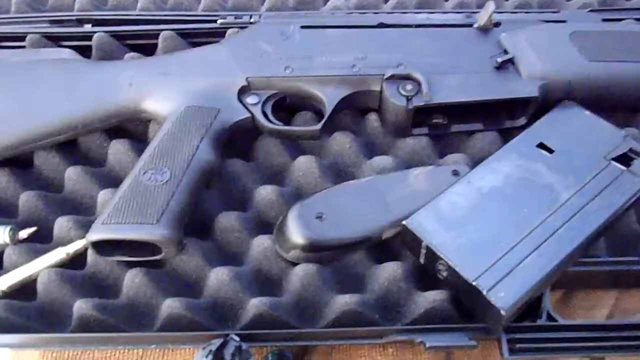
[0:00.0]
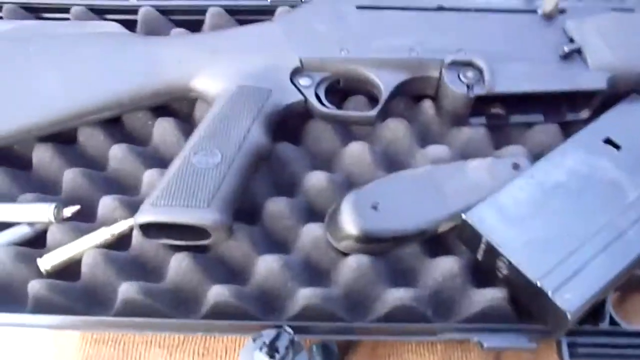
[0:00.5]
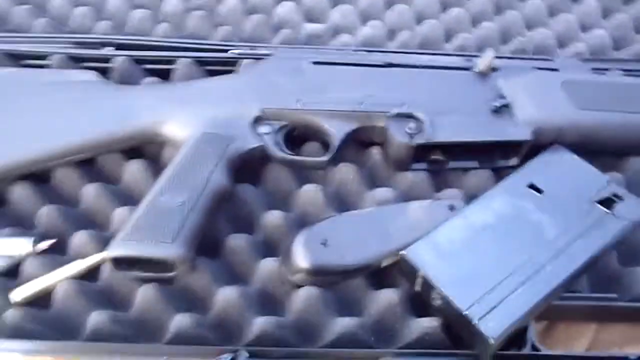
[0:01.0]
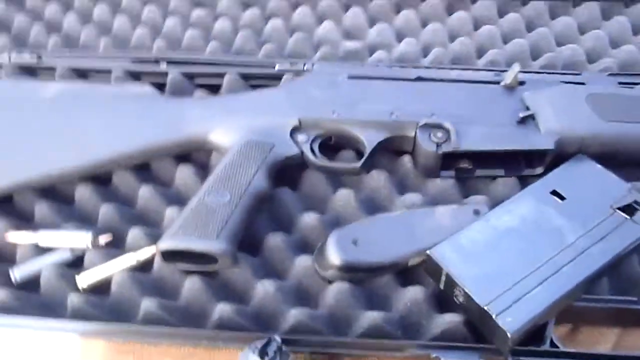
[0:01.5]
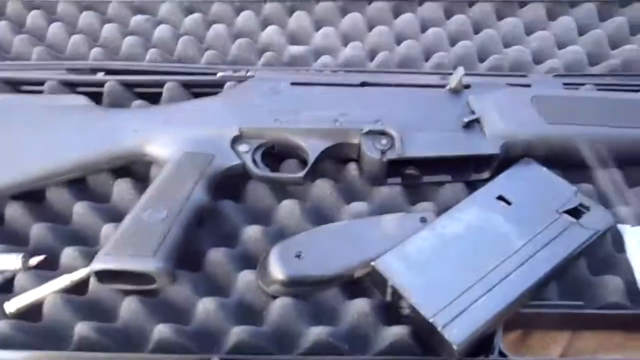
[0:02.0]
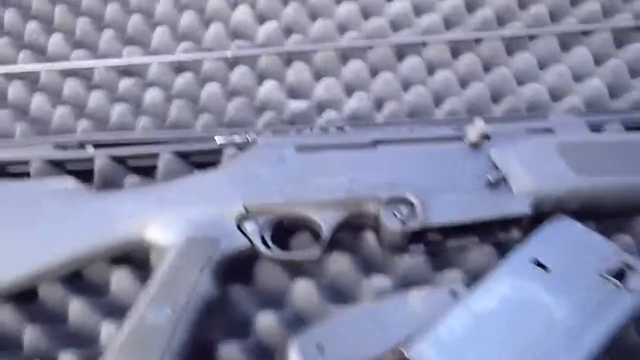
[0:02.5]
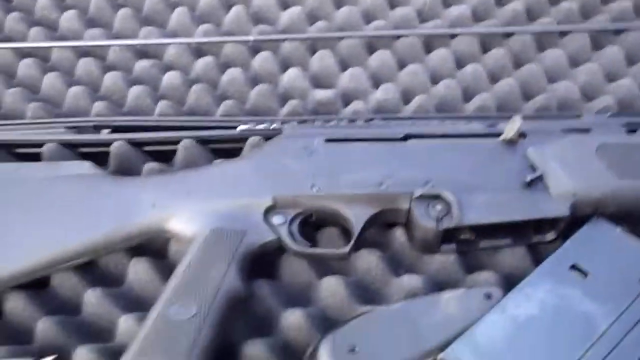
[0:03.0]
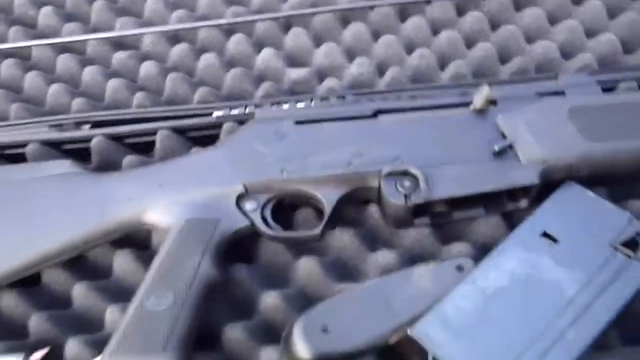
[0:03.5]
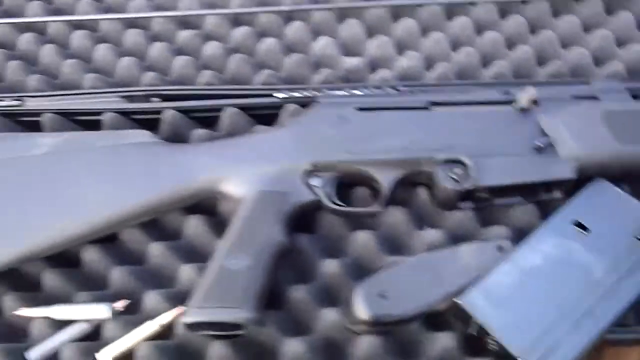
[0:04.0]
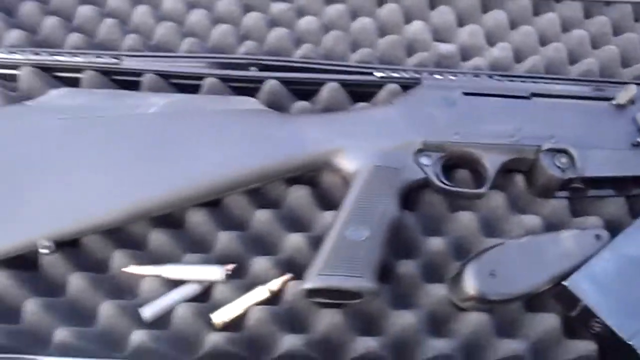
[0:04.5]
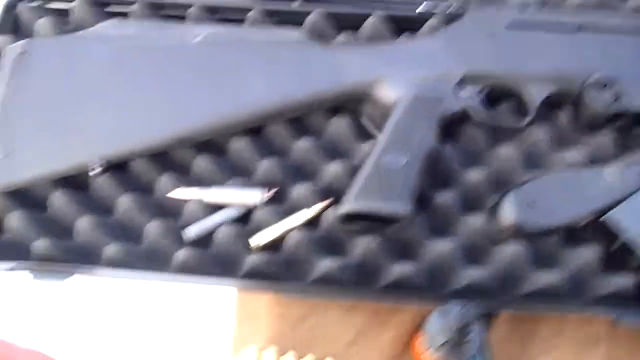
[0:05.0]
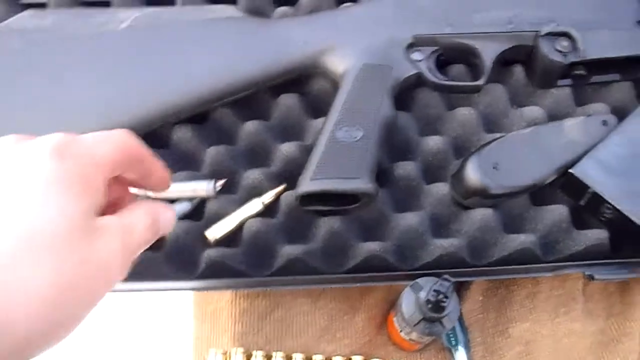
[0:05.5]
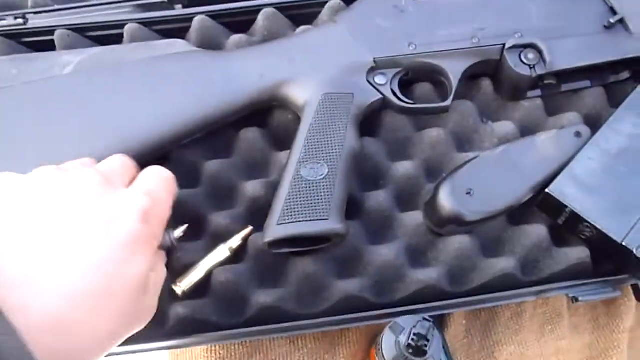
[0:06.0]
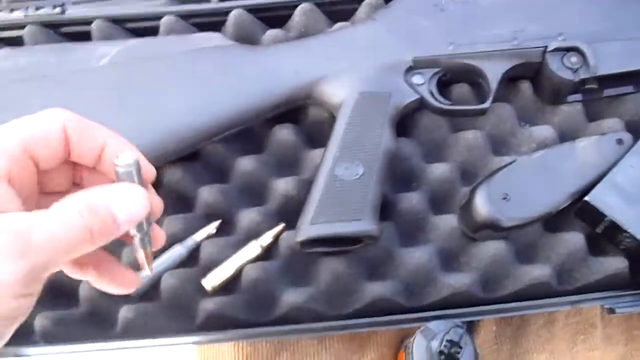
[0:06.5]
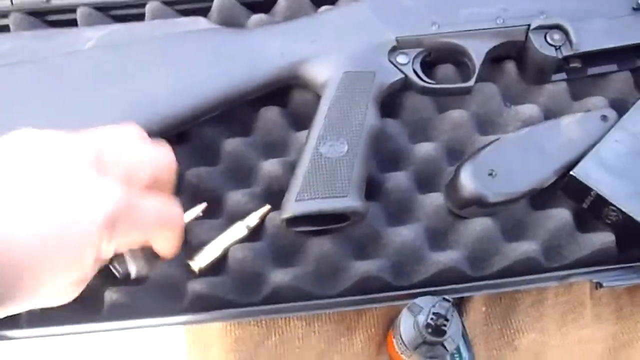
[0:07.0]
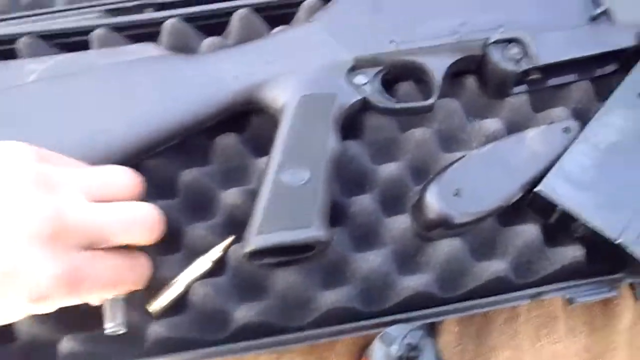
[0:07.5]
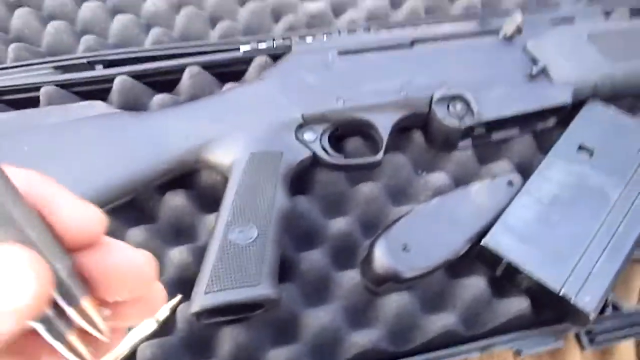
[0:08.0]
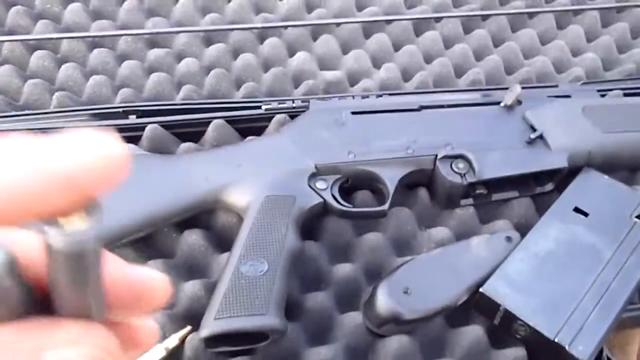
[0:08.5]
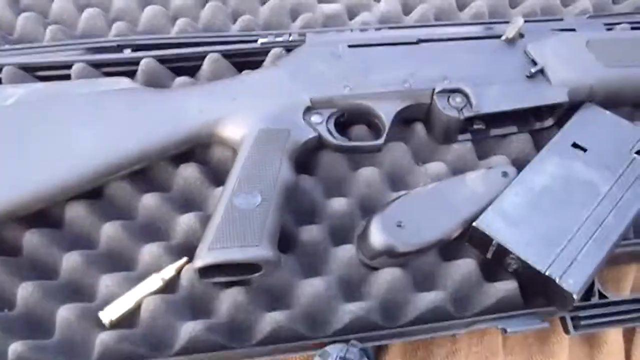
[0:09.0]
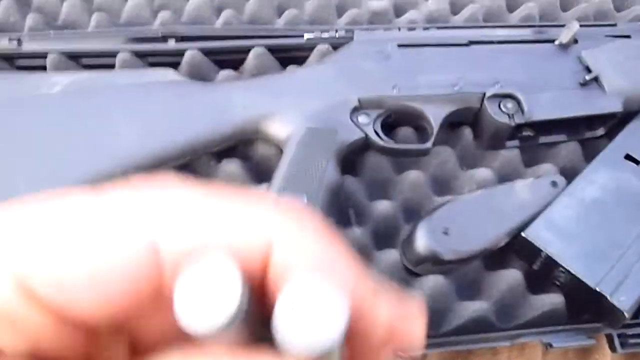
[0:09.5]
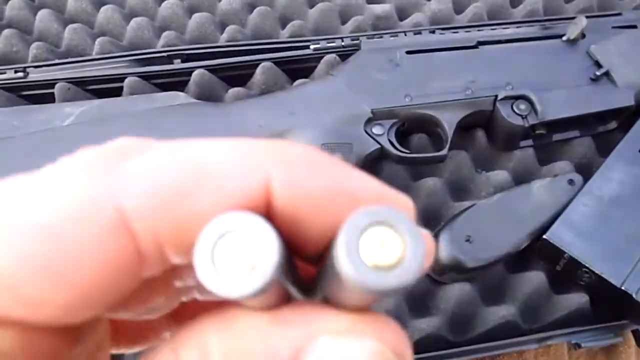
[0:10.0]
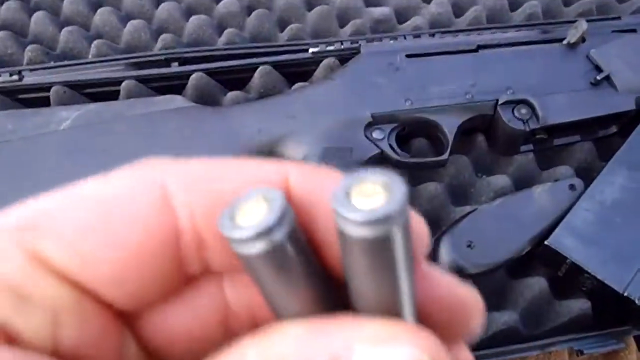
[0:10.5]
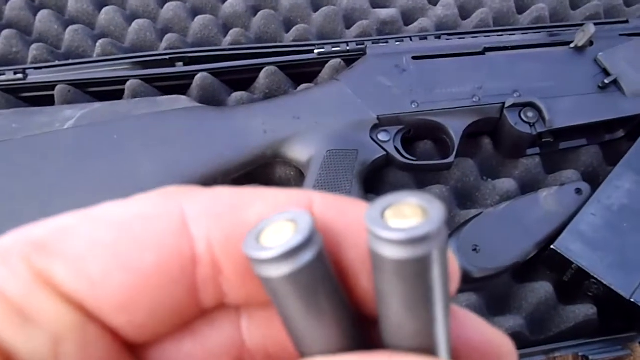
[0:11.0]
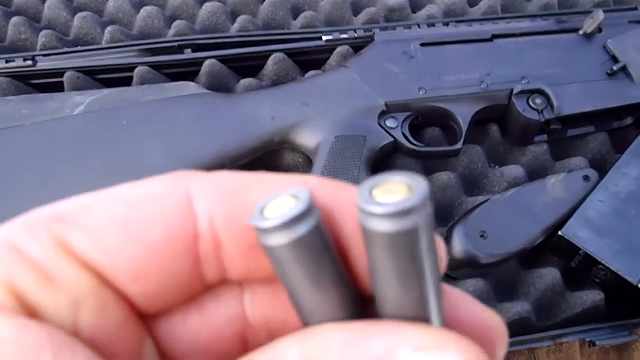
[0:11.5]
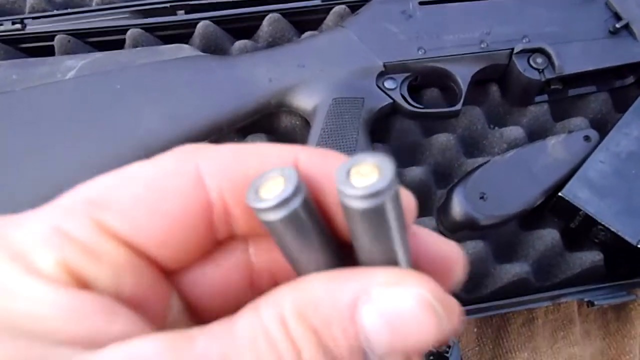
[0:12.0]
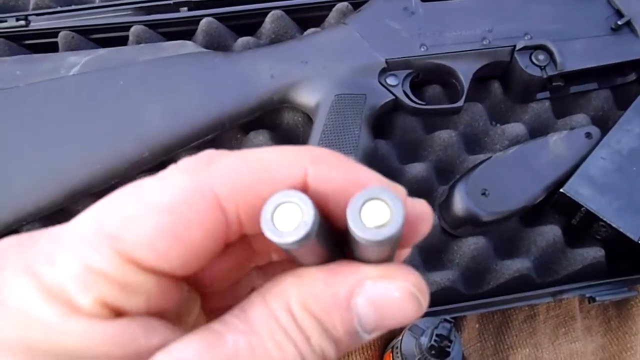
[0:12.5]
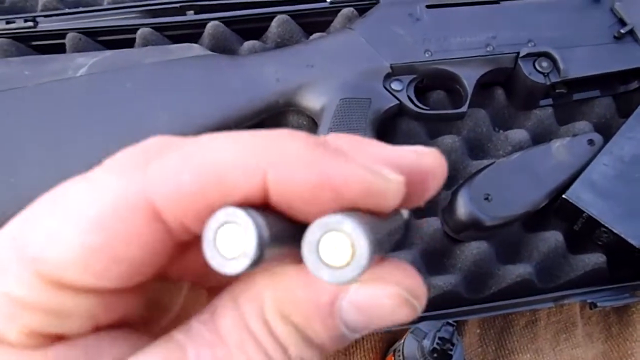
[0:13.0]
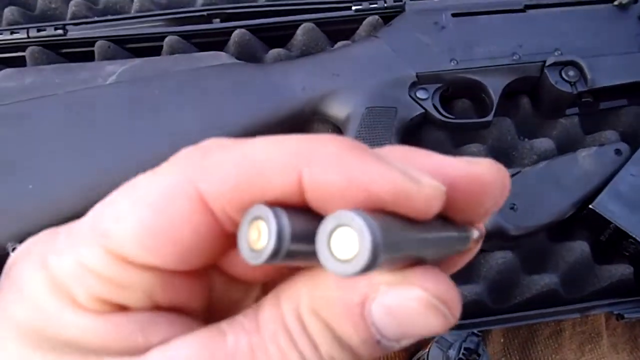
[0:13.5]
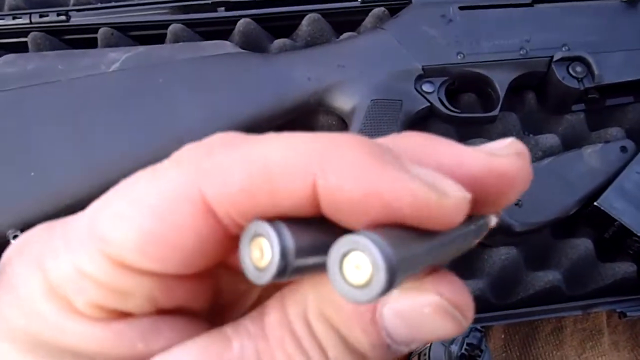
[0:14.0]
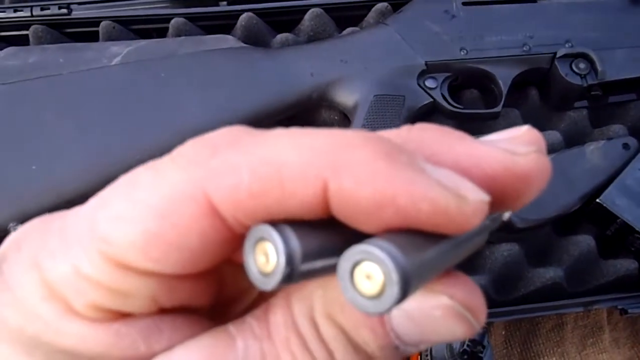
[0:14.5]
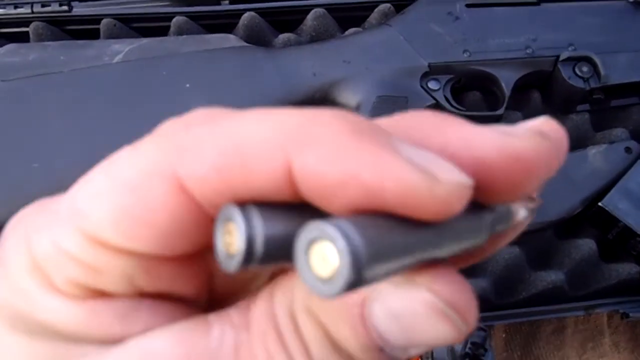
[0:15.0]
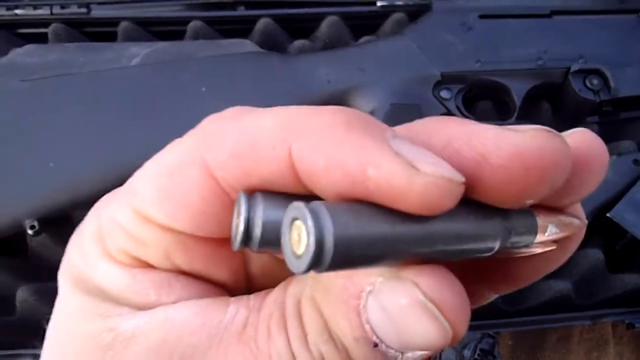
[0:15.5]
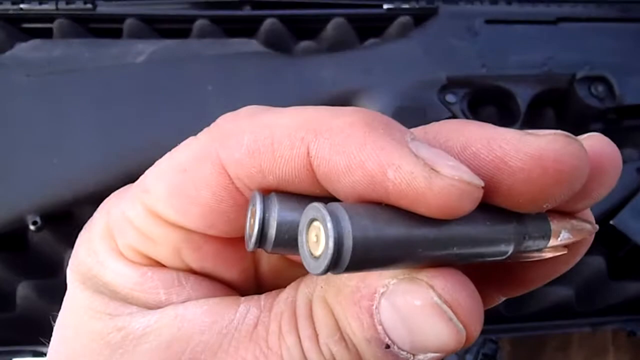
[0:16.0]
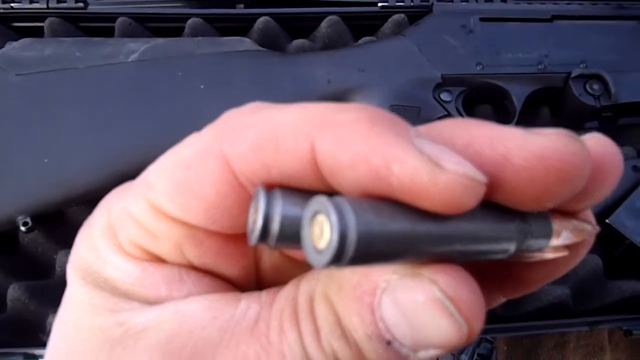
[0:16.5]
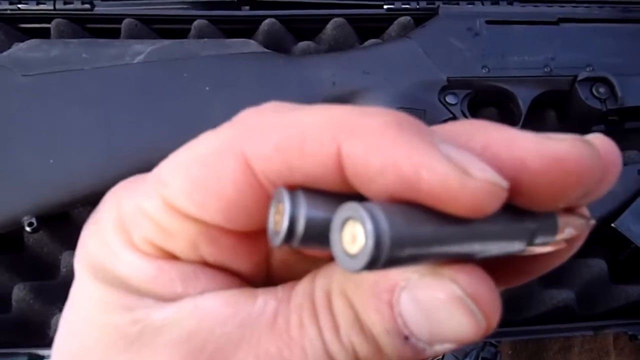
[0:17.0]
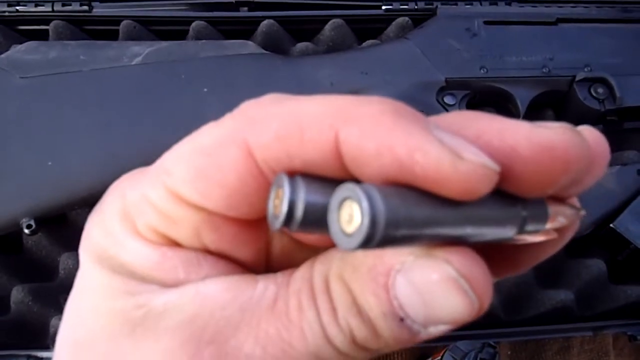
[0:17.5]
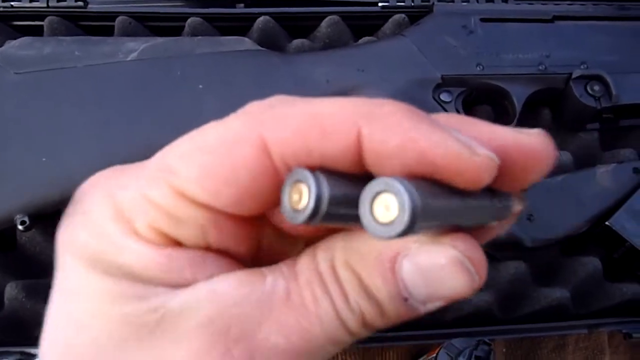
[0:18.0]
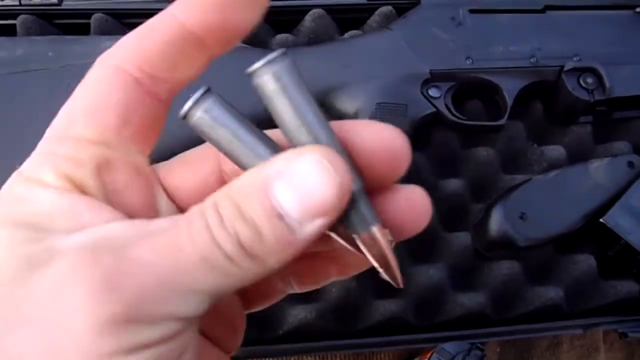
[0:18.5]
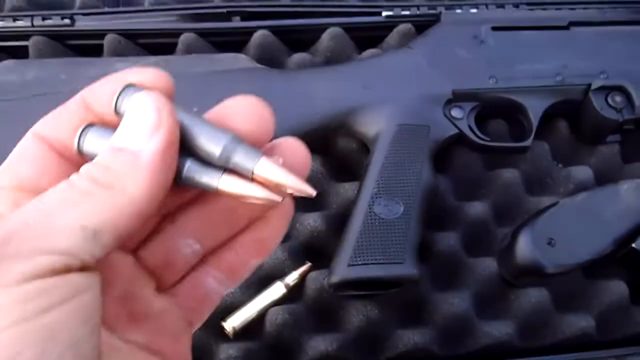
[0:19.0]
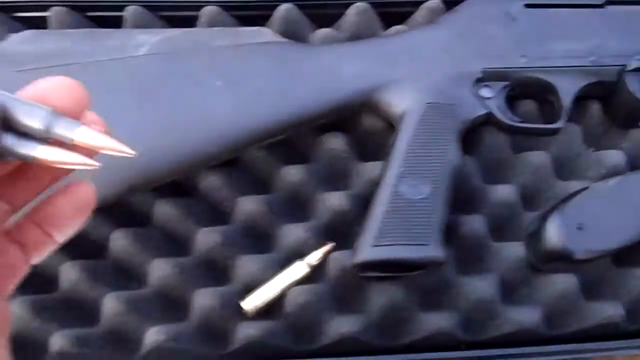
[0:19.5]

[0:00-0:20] The setting seems to be some sort of gun store. The camera faces a gun, of an unidentified model, that is in some sort of case with ammunition sitting next to it. A man picks up the ammunition and seems to be showing it off and what kind of ammunition it is. The gun is laying in the case with the ammunition next to it.